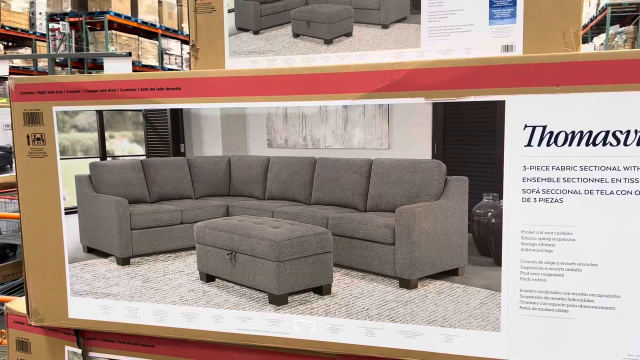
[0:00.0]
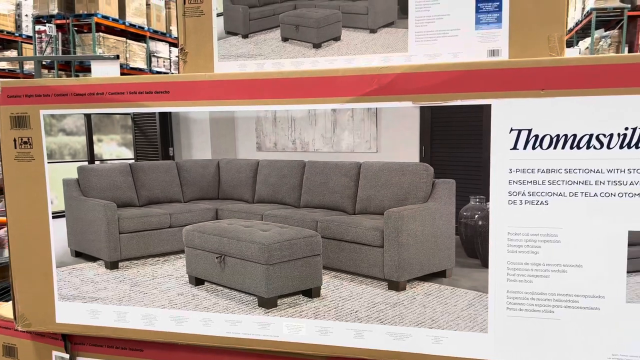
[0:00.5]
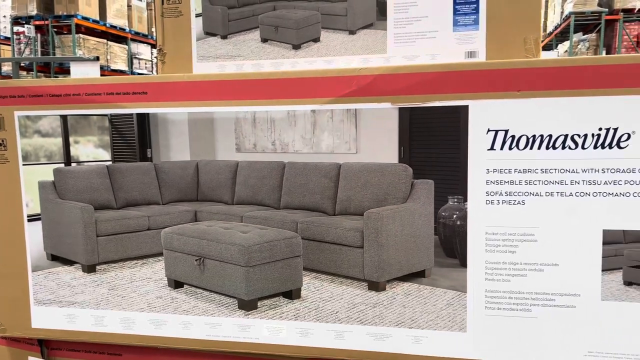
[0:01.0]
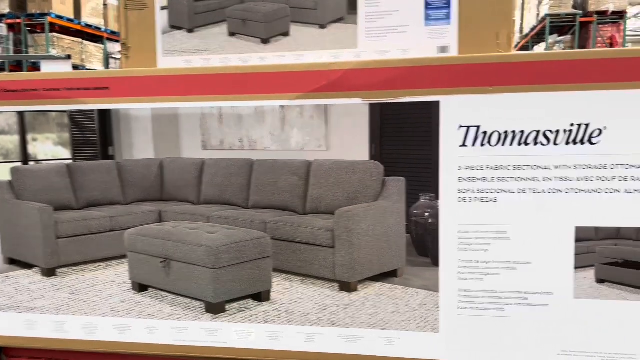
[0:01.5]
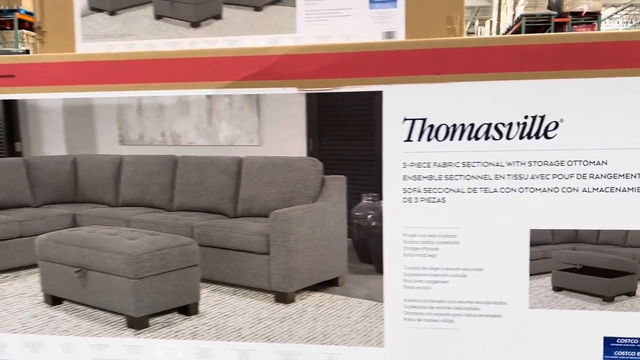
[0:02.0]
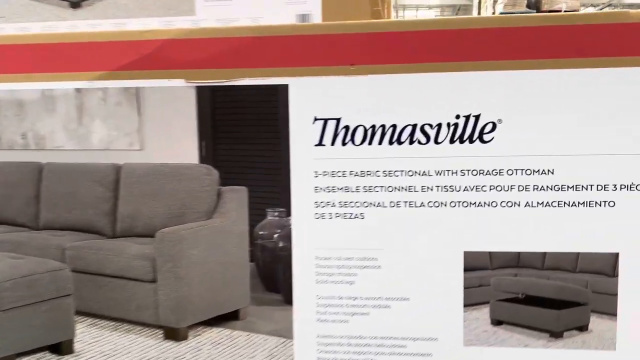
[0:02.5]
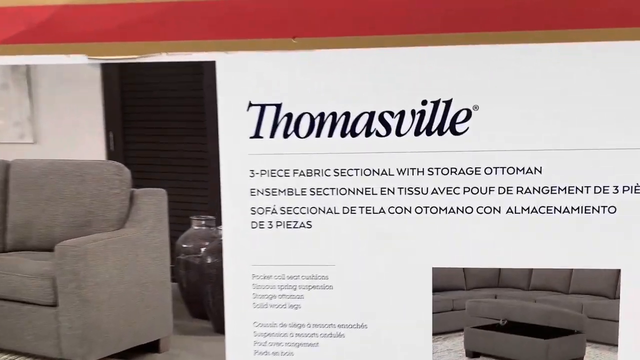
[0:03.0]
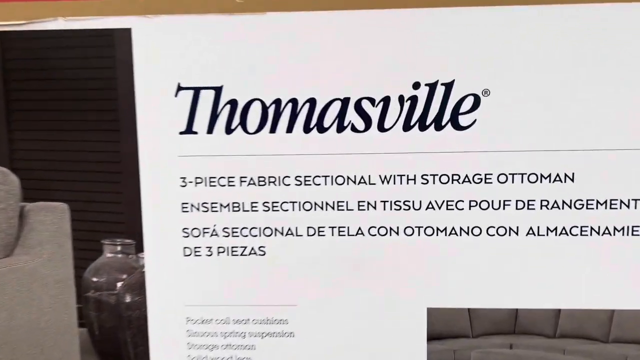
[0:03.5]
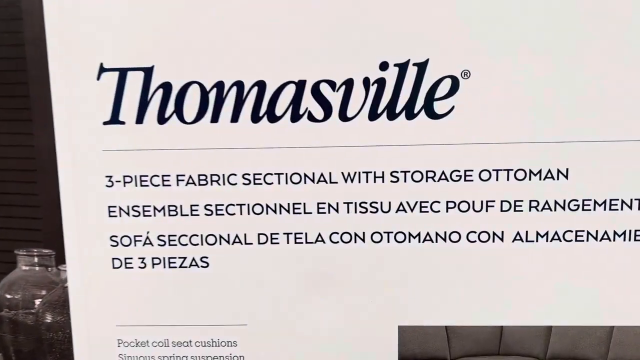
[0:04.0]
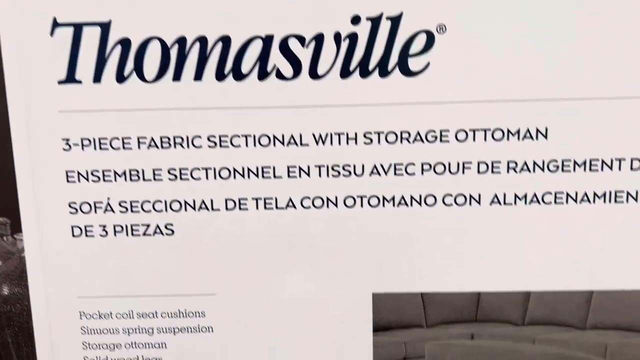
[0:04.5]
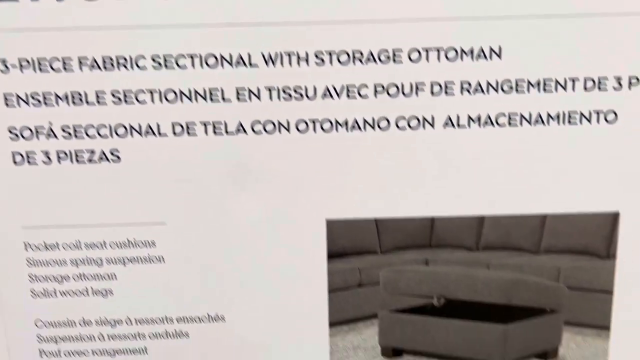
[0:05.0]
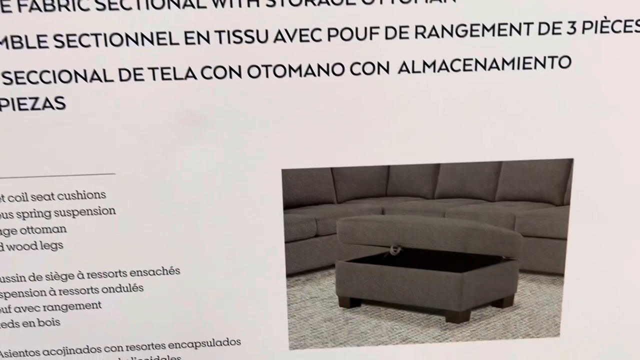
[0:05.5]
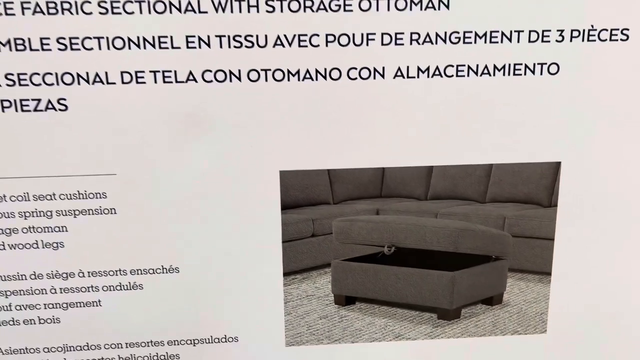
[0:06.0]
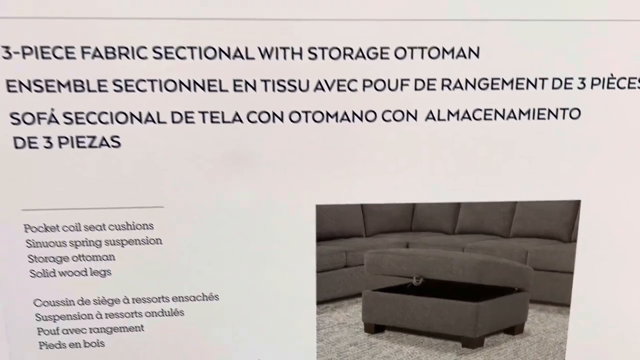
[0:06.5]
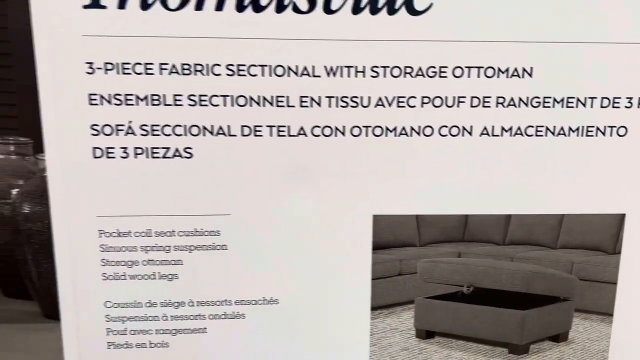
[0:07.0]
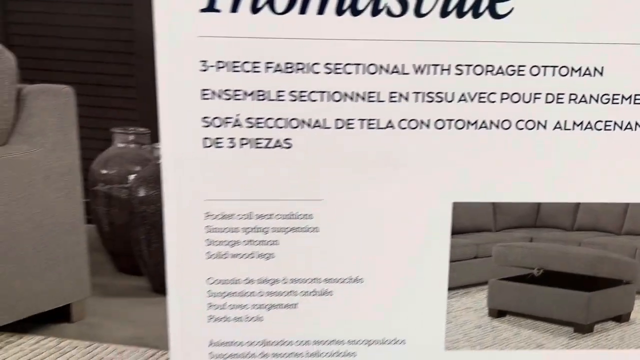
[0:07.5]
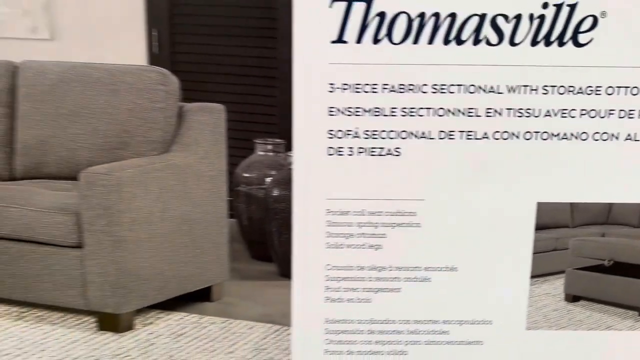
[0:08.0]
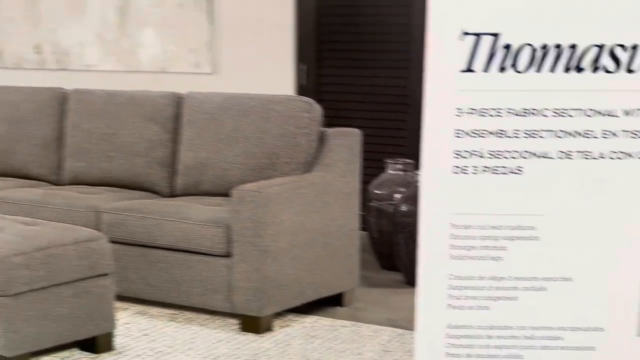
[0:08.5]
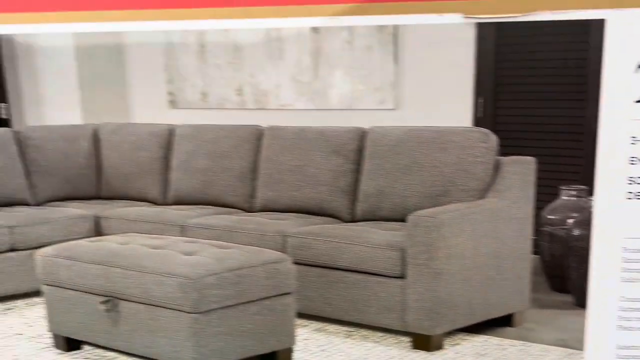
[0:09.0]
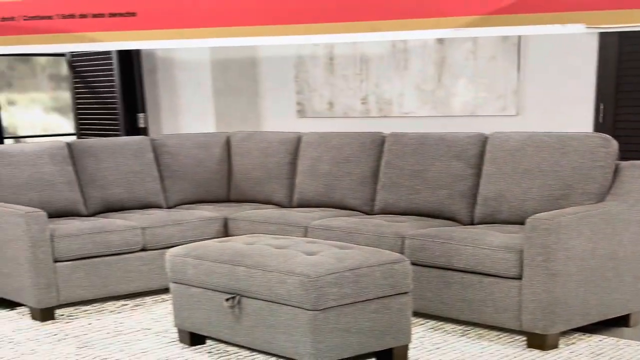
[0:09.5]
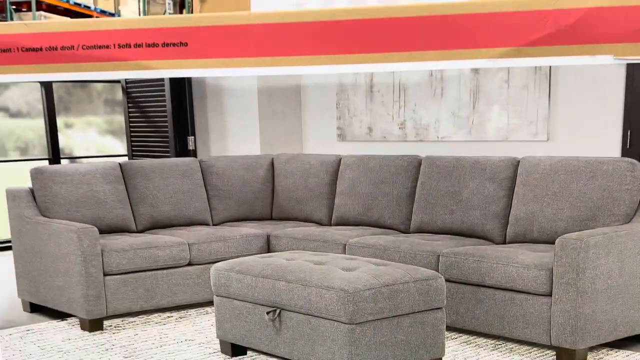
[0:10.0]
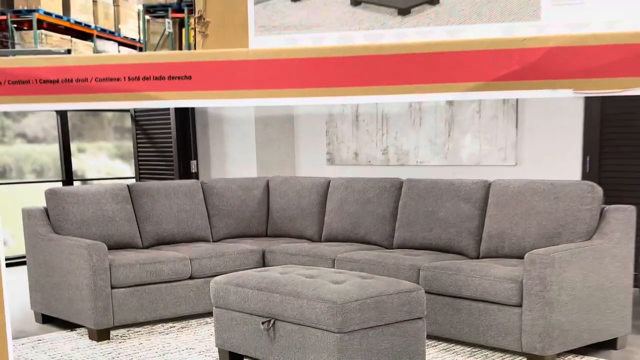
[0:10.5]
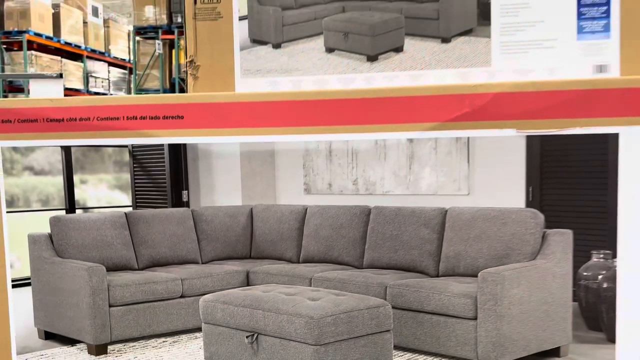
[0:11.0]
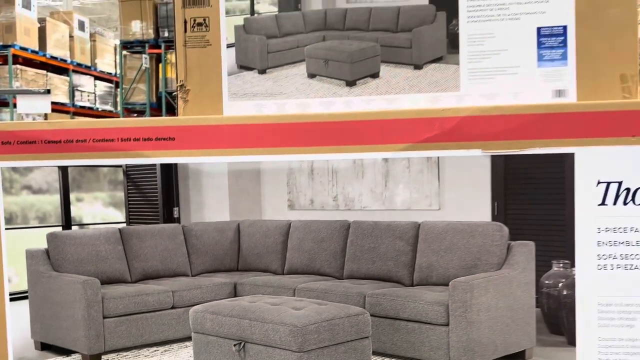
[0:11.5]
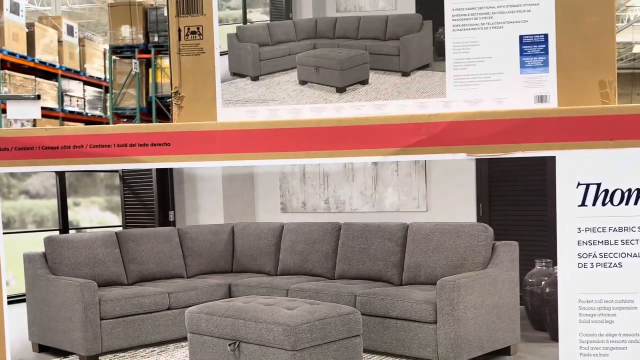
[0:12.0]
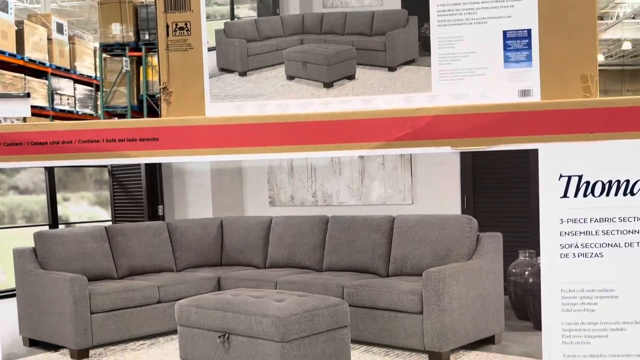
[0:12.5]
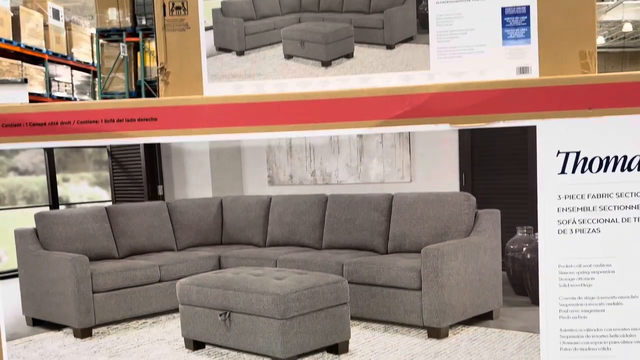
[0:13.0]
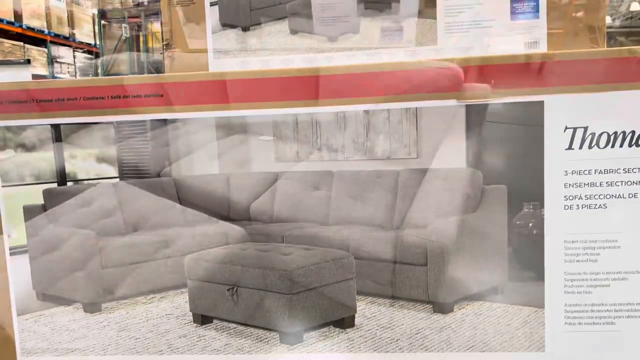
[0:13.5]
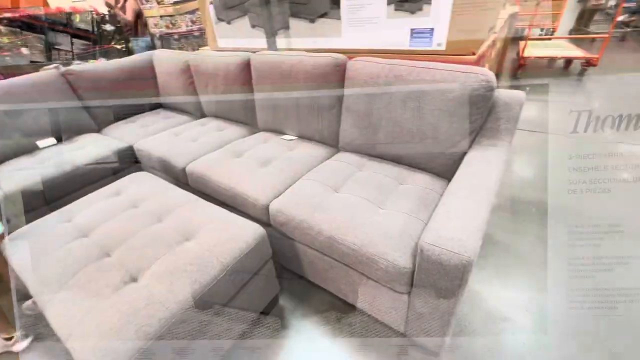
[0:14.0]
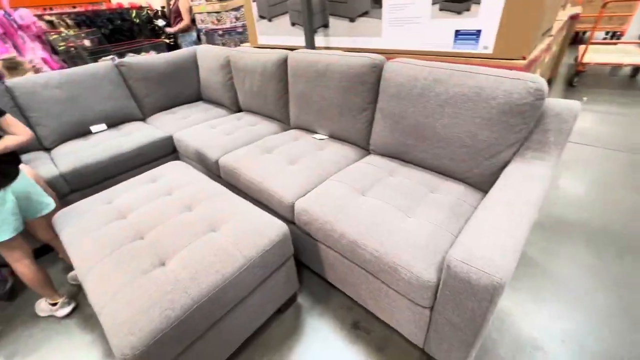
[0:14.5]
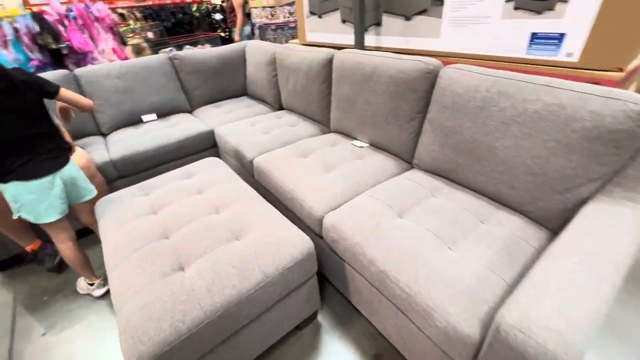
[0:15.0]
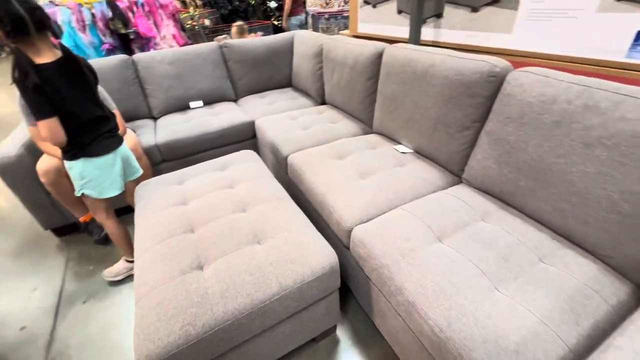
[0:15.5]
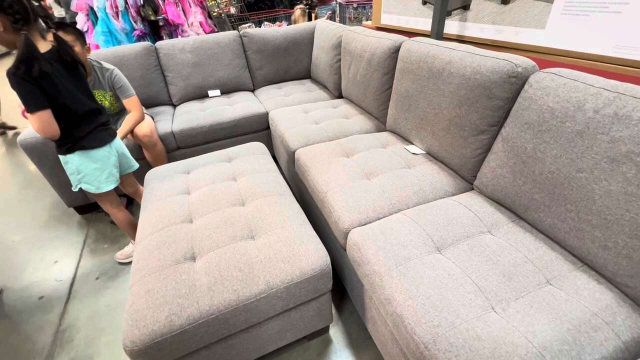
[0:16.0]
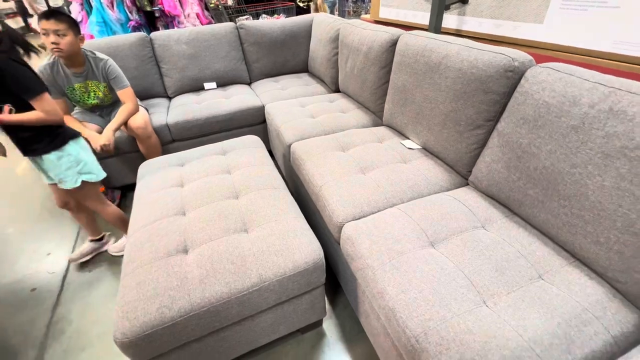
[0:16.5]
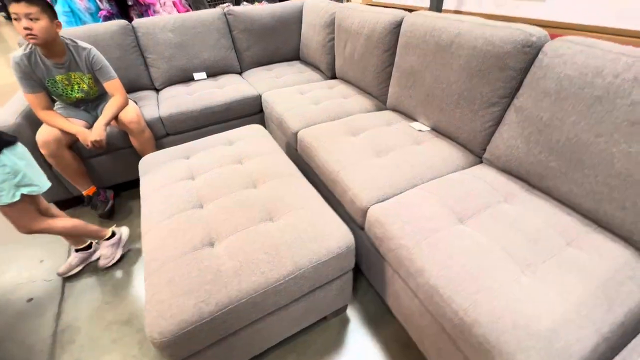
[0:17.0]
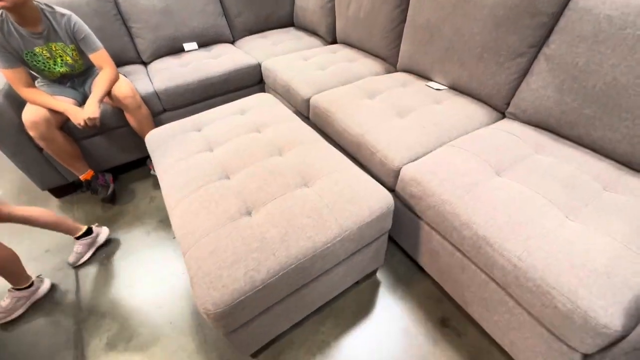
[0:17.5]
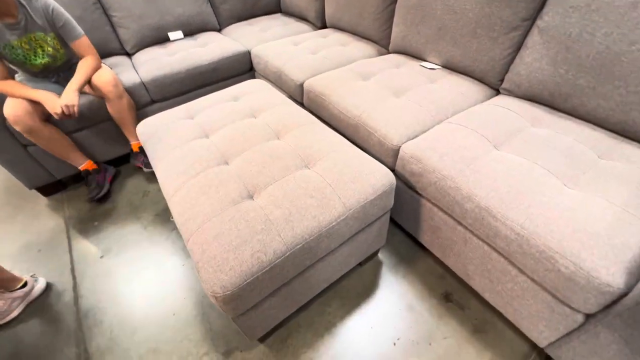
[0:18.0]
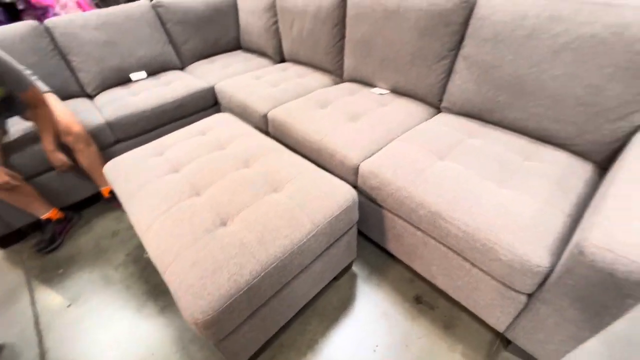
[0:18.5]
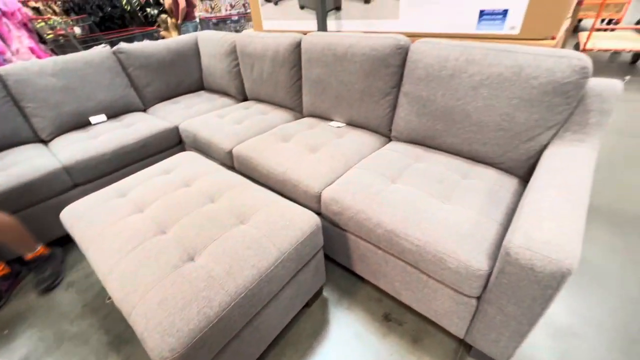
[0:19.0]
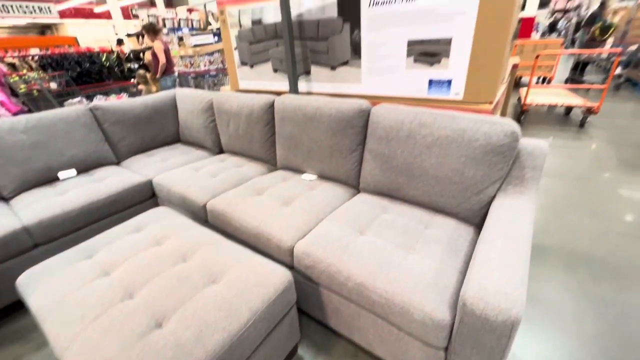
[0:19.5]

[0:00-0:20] A person appears to be recording the outside of a box for a sectional couch. The box is very large and rectangular, with an image of the couch on top of it. Other boxes of the same product may be in the background, and large shelves there seem to hold other large cardboard boxes. The couch seems to be from the brand Thomasville. The person zooms in on the different specs shown on the outside of the package, where it says "three piece sectional with a storage ottoman". Another image on the box shows the ottoman partially opened. The person seems to step back and record more of the box in its entirety. The video then shows the sectional couch built and displayed on what looks to be the floor of the store. The couch is gray, and a couple of kids are sitting on it and testing it out.